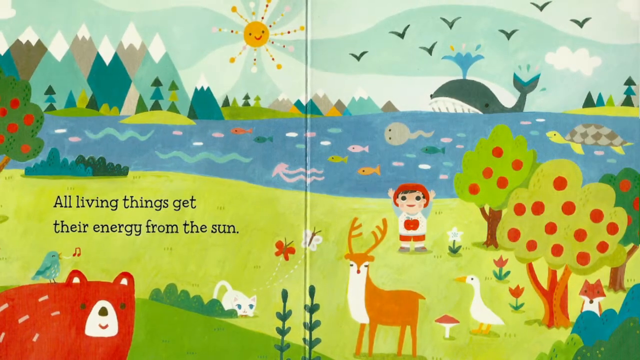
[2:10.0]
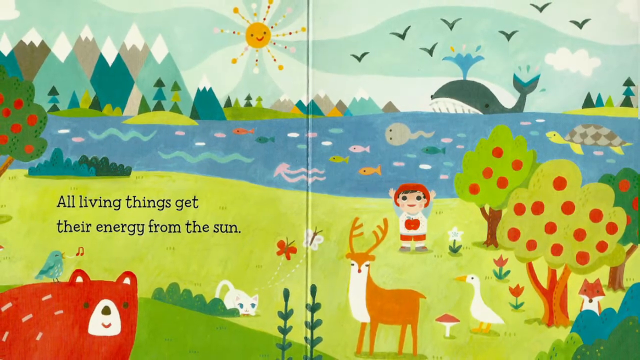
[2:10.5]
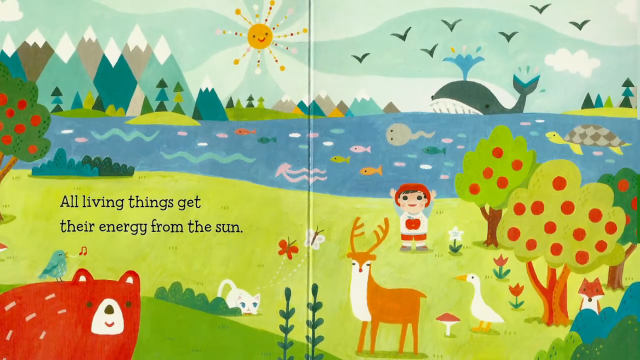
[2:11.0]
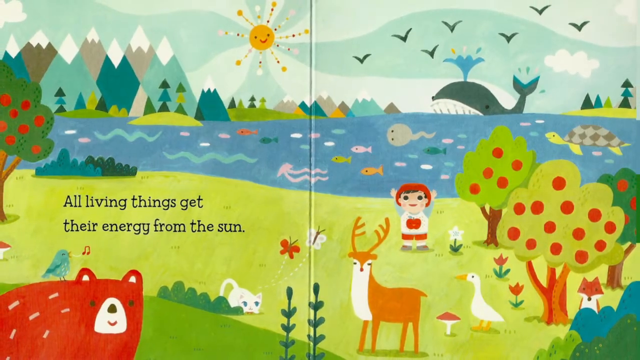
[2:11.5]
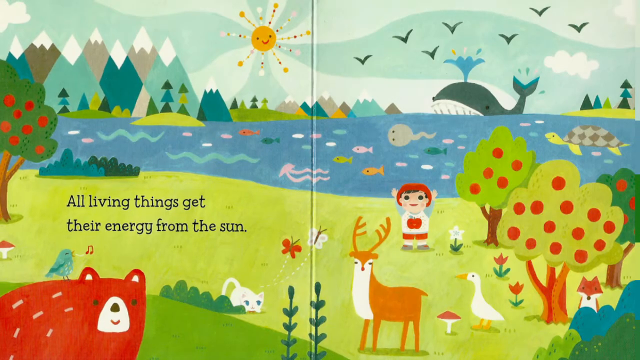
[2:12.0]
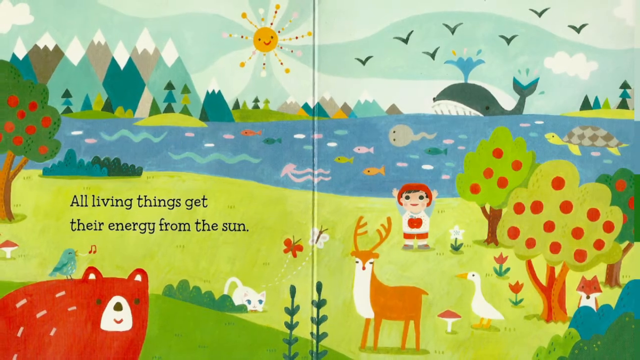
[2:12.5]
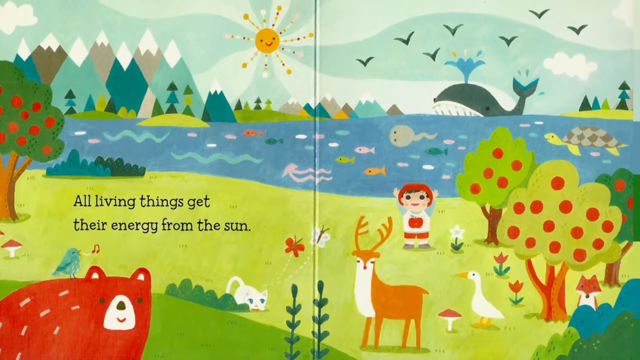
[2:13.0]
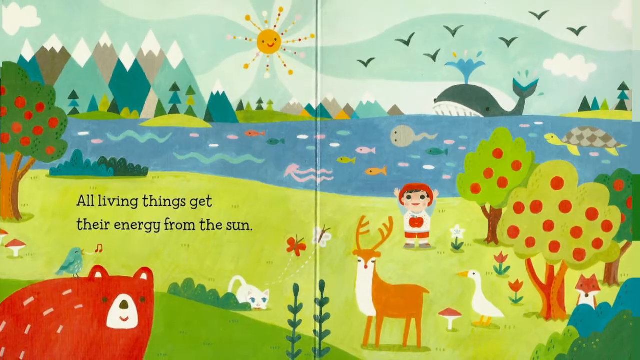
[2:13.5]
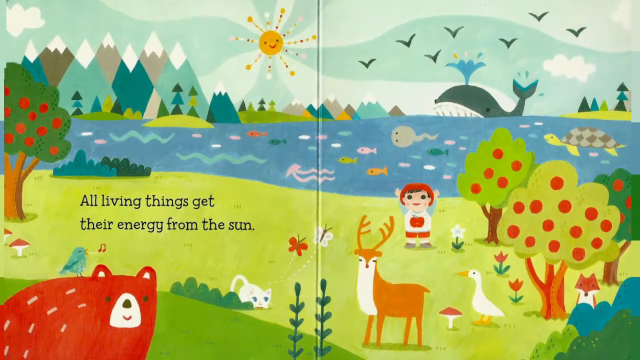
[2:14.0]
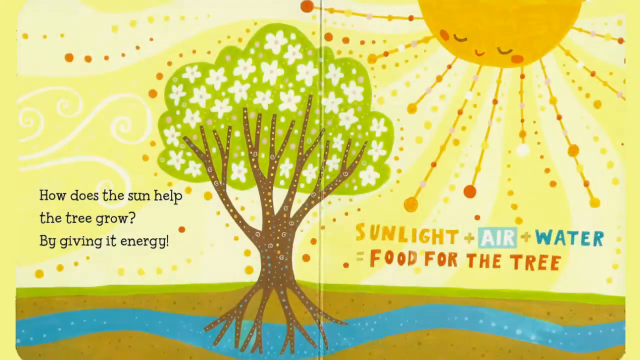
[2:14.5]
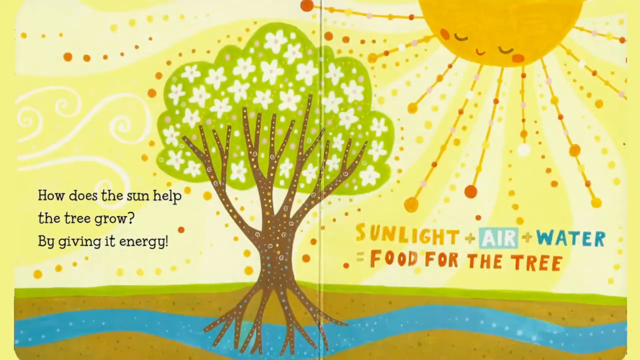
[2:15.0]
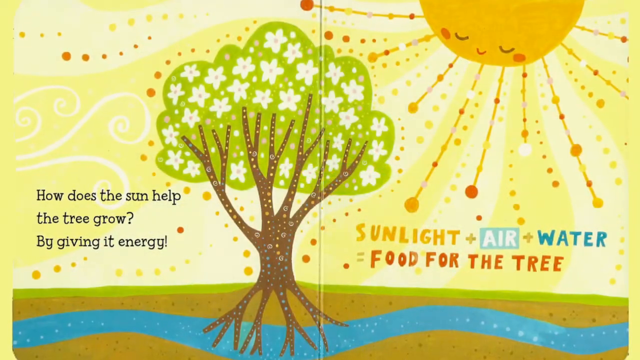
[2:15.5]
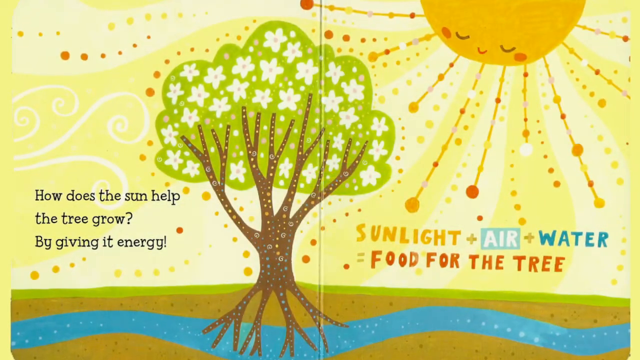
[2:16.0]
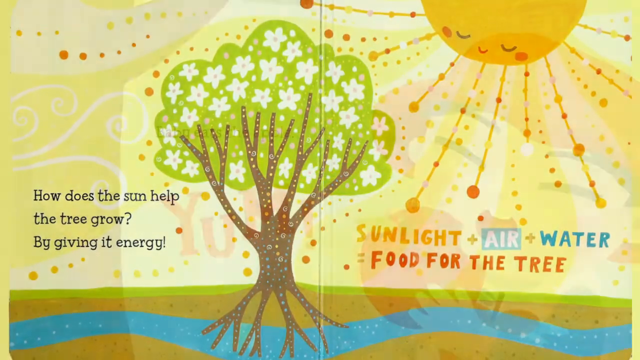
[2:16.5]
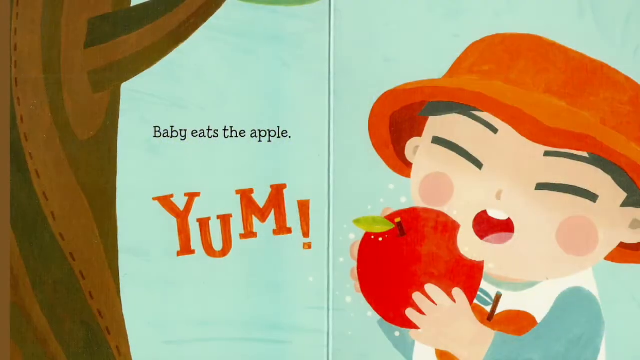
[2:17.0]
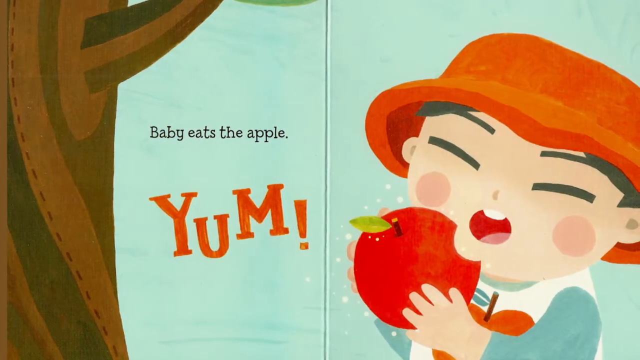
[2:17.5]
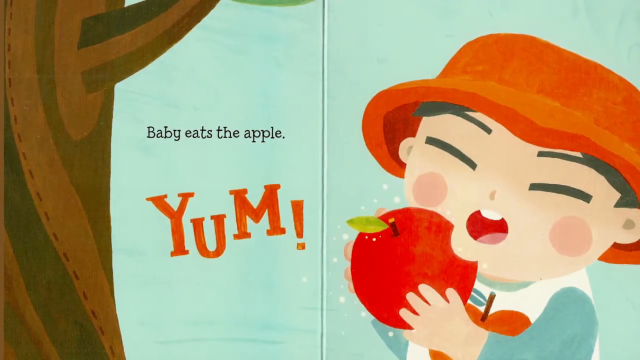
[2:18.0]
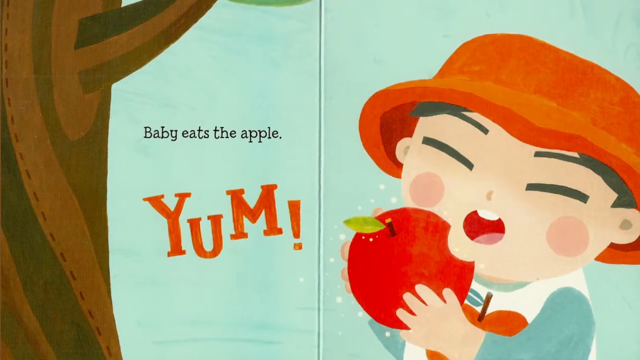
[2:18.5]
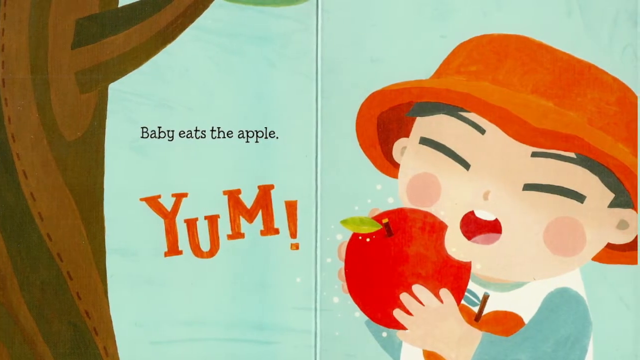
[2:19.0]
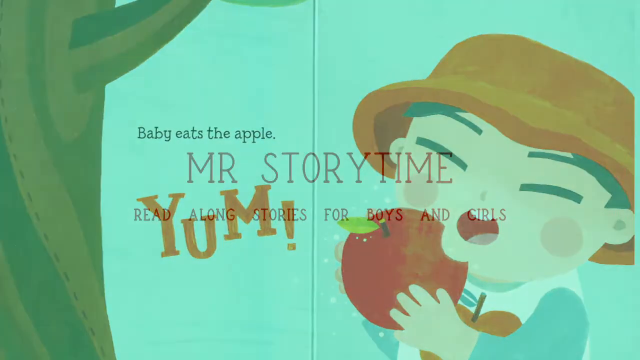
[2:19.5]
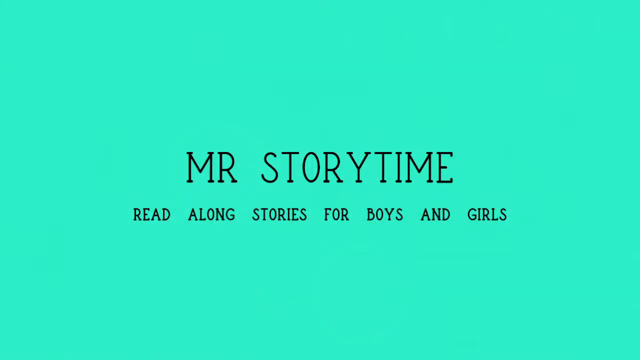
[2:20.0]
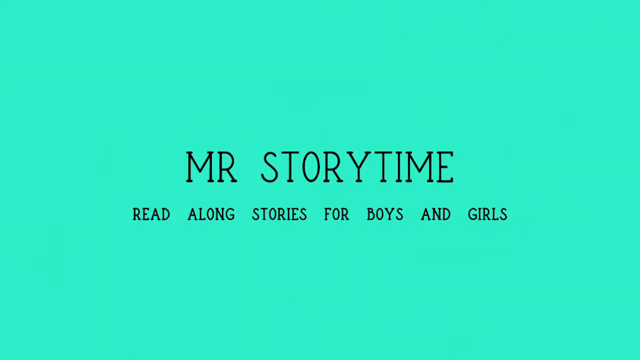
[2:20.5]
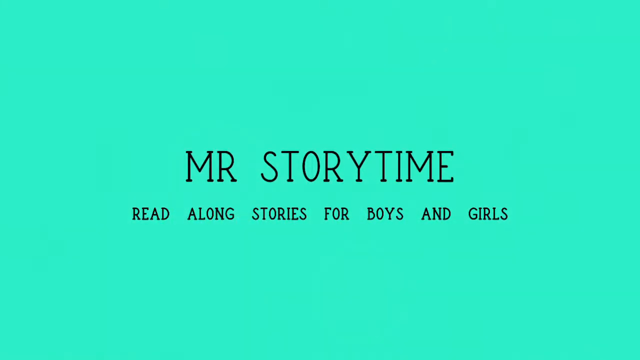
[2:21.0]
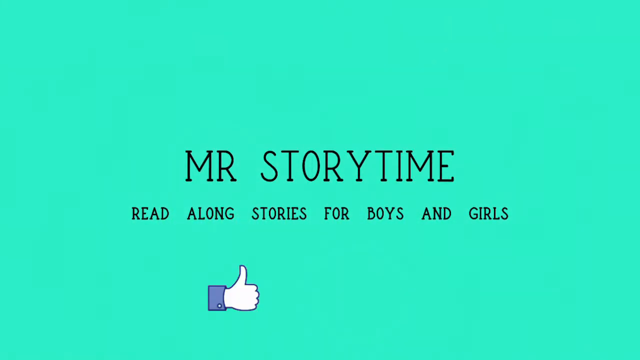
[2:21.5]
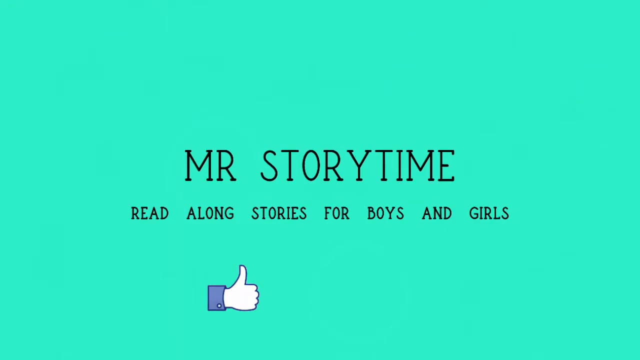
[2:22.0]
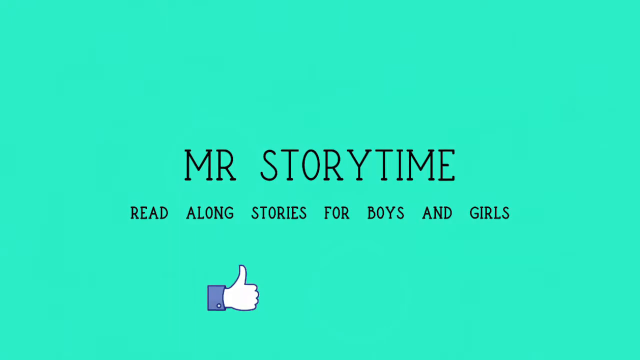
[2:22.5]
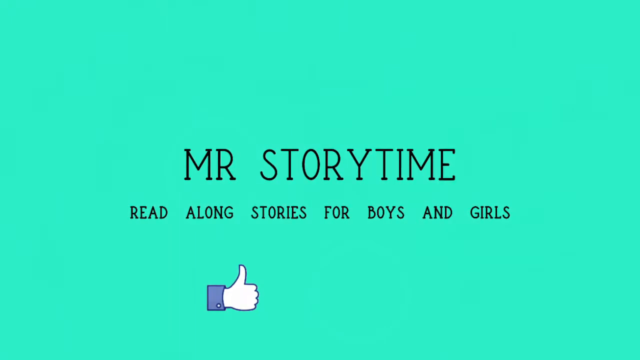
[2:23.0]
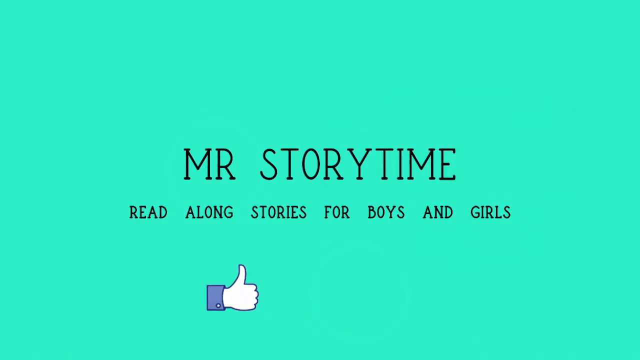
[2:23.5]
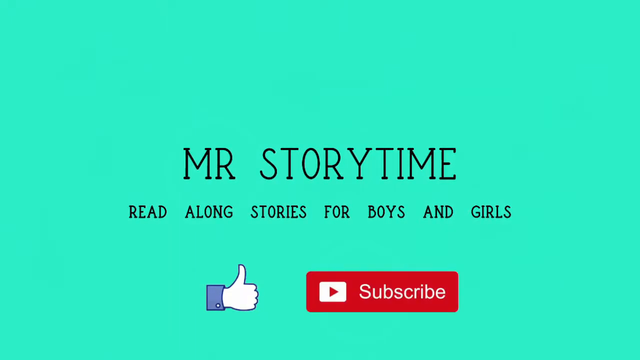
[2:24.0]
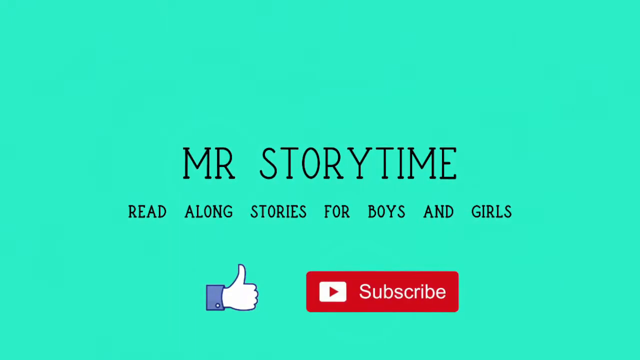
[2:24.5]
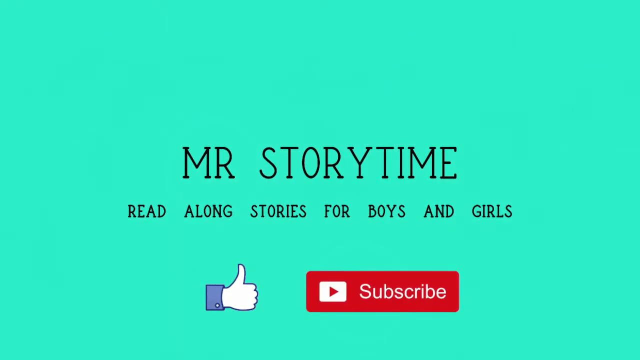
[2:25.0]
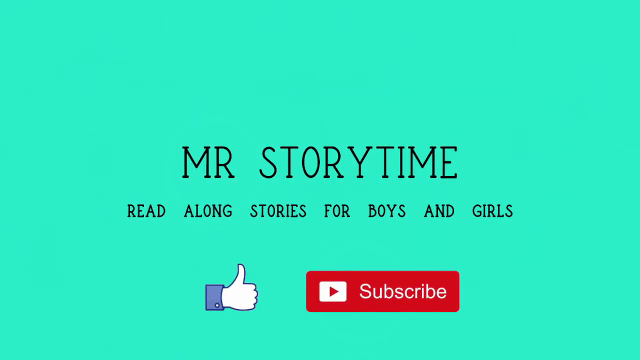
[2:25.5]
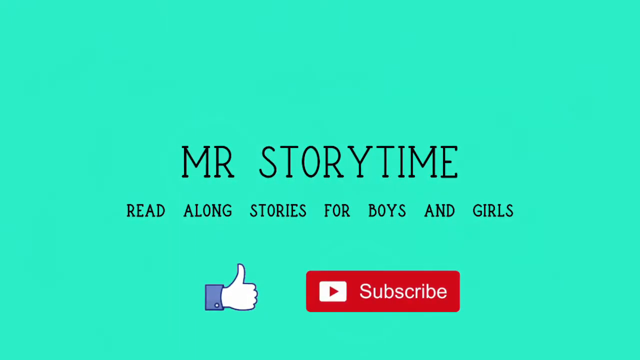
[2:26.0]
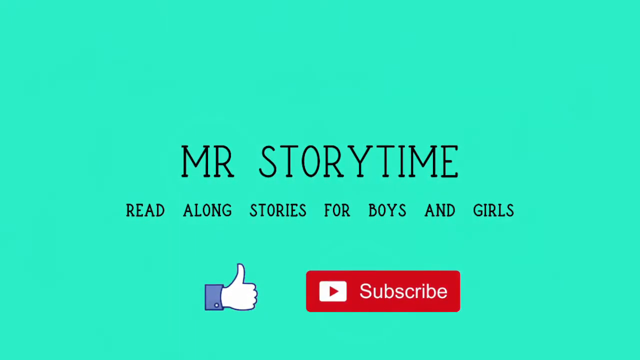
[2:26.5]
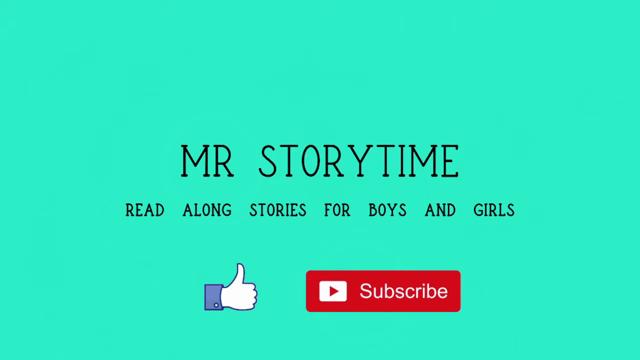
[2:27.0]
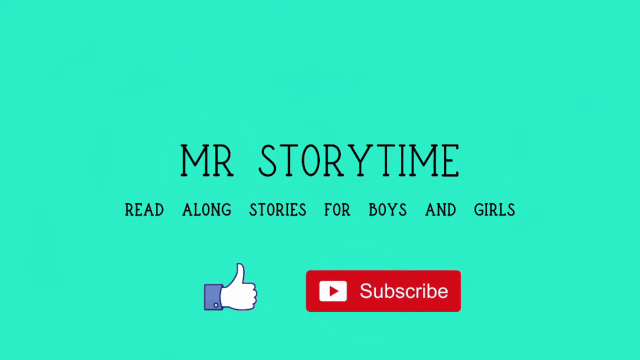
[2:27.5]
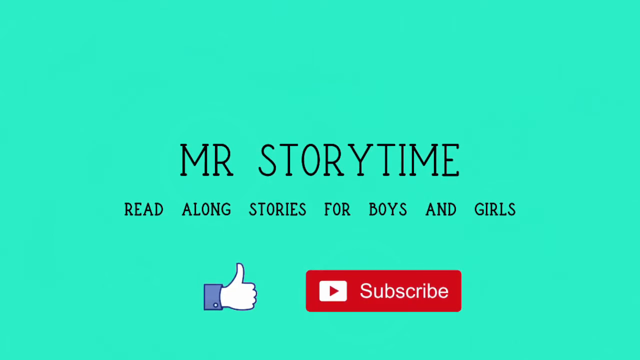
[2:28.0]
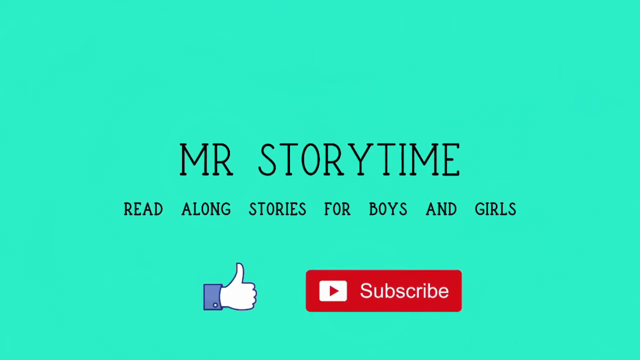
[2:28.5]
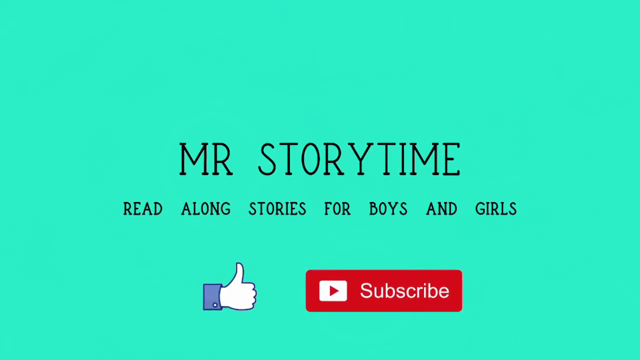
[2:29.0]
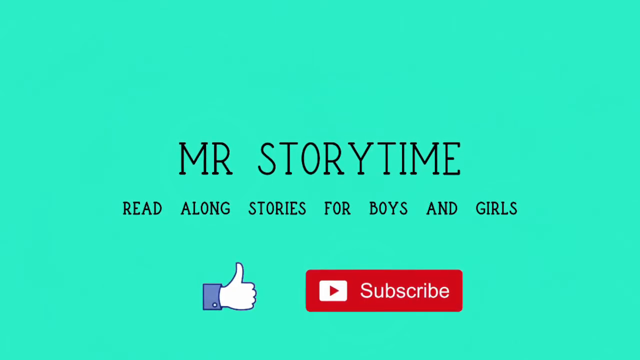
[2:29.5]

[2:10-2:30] The previously shown image fades out. A new screen returns to sort of the first format, with a yellow background. There is one larger tree, light green with flowers, with a number of branches extending from the brown trunk. The sun is on the right and looks a little content. It is similar to one of the first images. It says "how does the sun help the tree grow by giving you energy." This fades out to "baby eats the apple" with a big "yum" in different shades of red underneath it, and the child with closed eyes holding an apple with a bite taken out of it, his mouth open showing two teeth. He looks content. Finally, the video cuts to a screen that does not look like a book, which says "Mr. Storytime read along," with "Mr. Storytime" larger and in black, and below that "read along stories for boys and girls." The whole screen is on a turquoise background. A thumbs-up appears beneath it, and then a red YouTube subscribe button with a white play symbol and a white "subscribe" next to it. Then it fades out and the video ends.